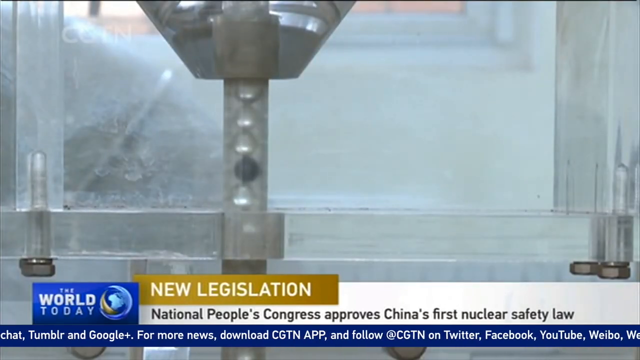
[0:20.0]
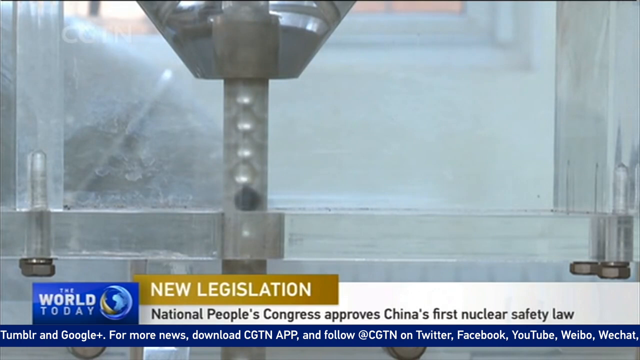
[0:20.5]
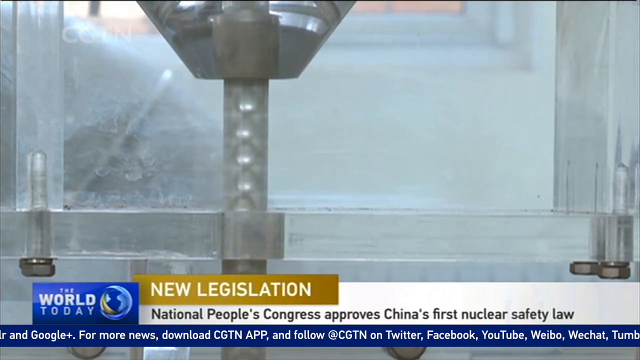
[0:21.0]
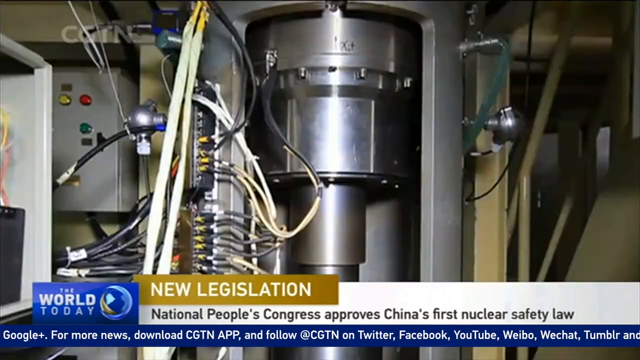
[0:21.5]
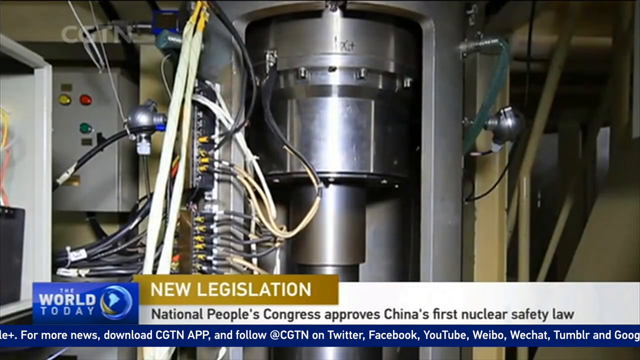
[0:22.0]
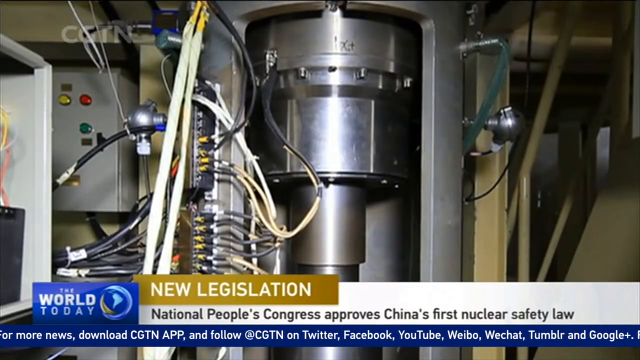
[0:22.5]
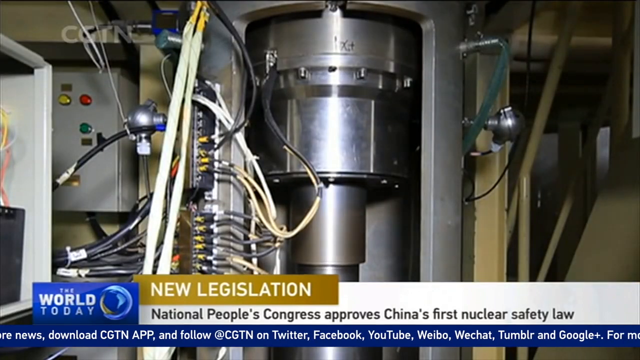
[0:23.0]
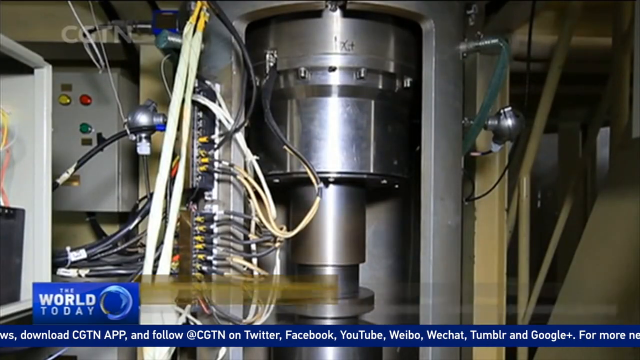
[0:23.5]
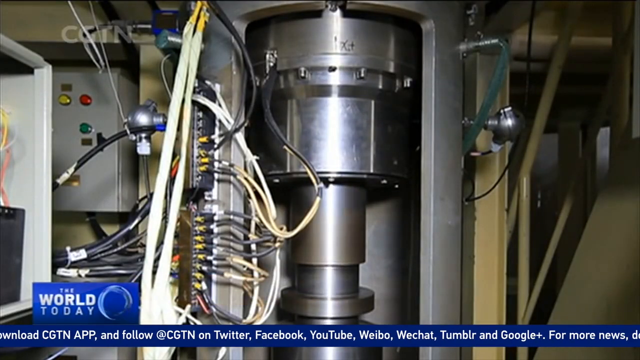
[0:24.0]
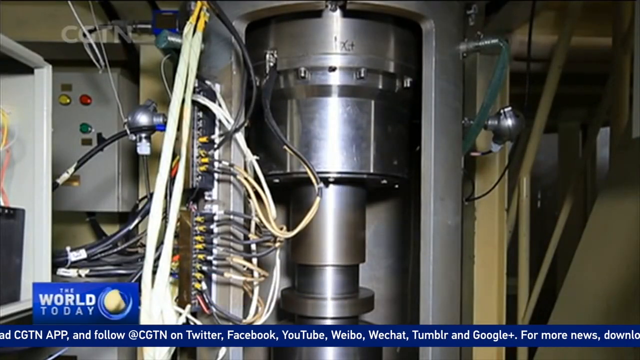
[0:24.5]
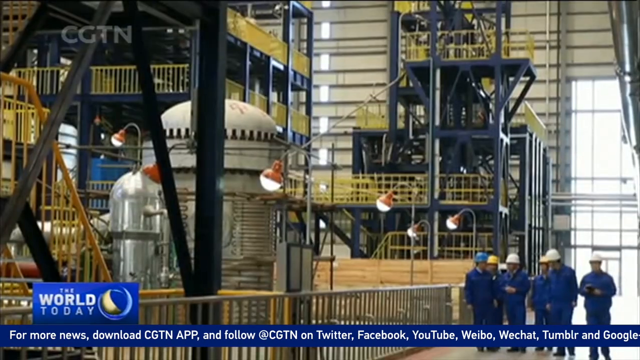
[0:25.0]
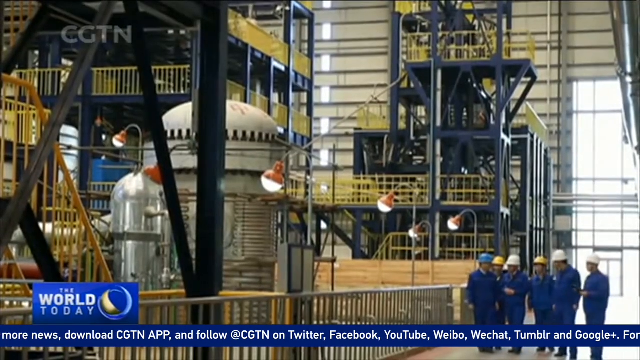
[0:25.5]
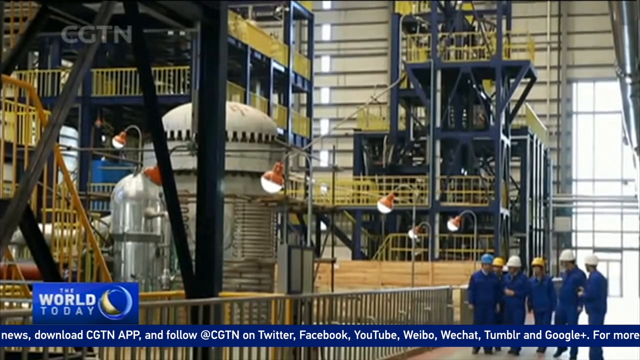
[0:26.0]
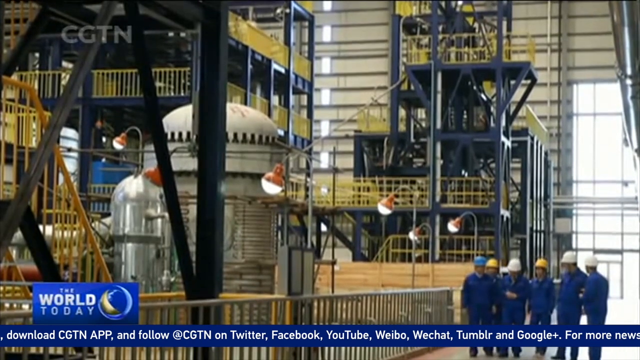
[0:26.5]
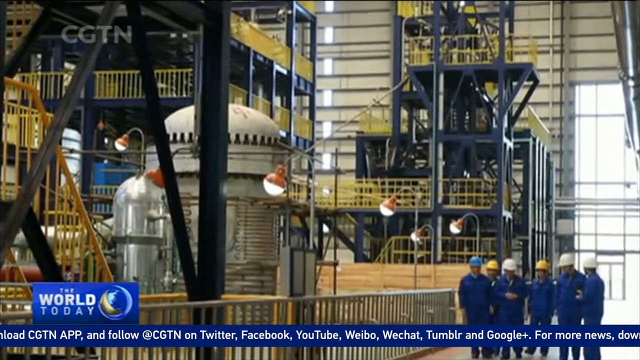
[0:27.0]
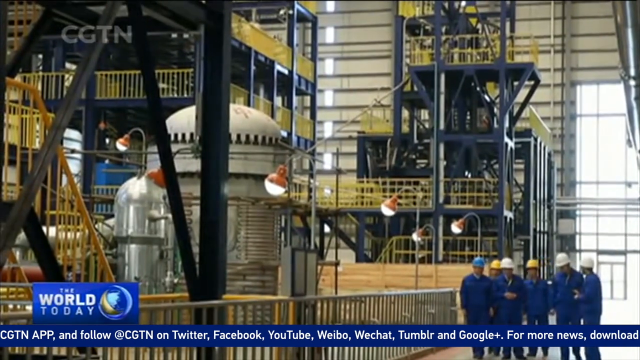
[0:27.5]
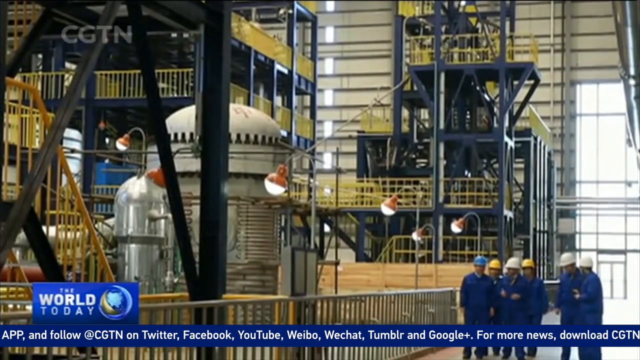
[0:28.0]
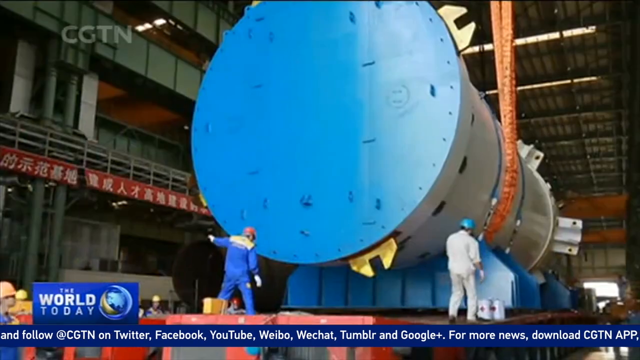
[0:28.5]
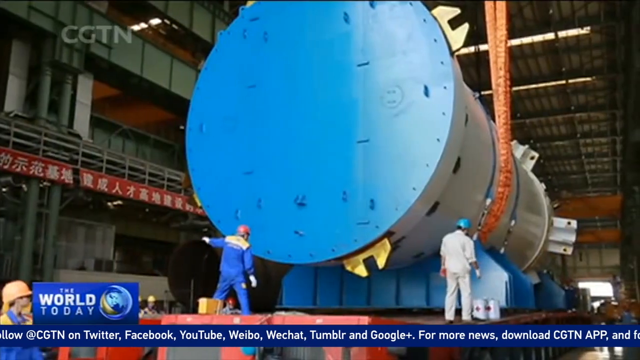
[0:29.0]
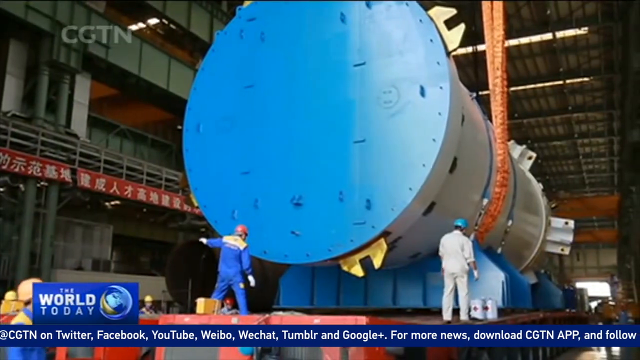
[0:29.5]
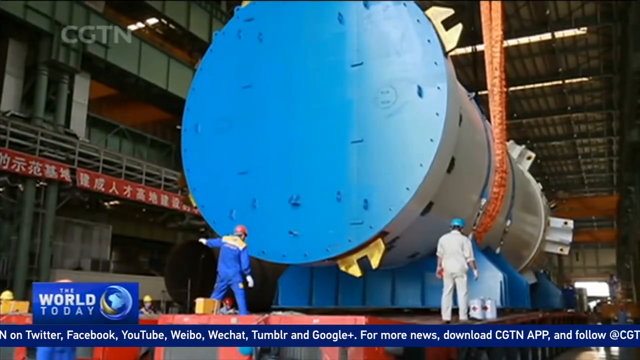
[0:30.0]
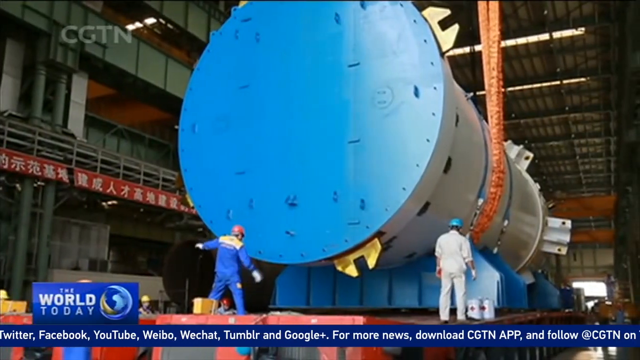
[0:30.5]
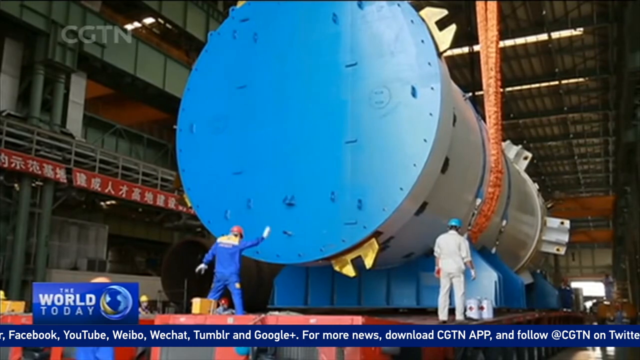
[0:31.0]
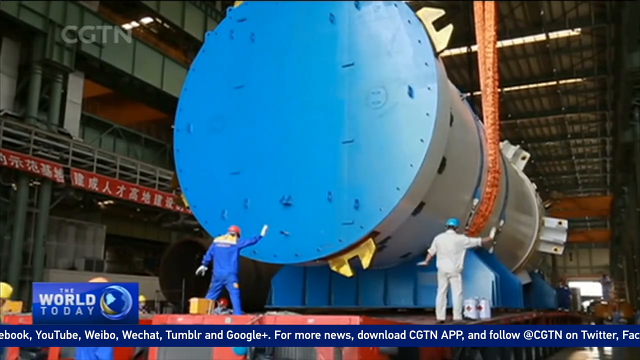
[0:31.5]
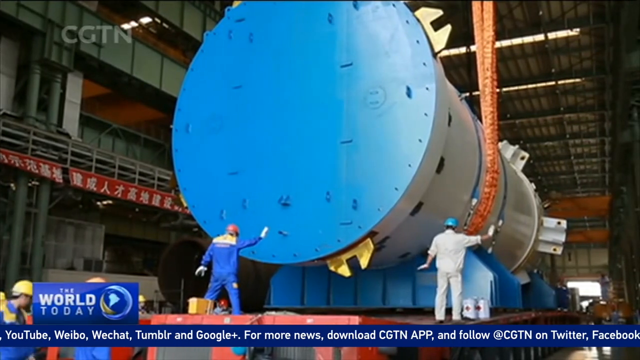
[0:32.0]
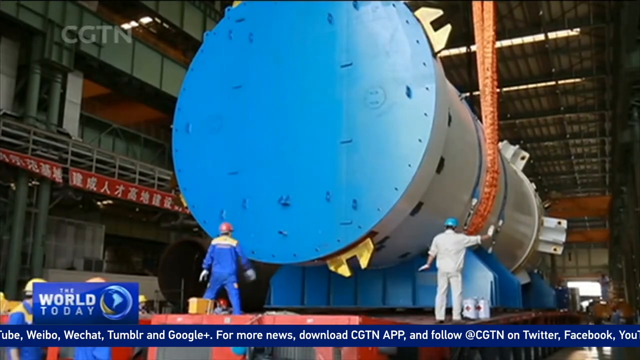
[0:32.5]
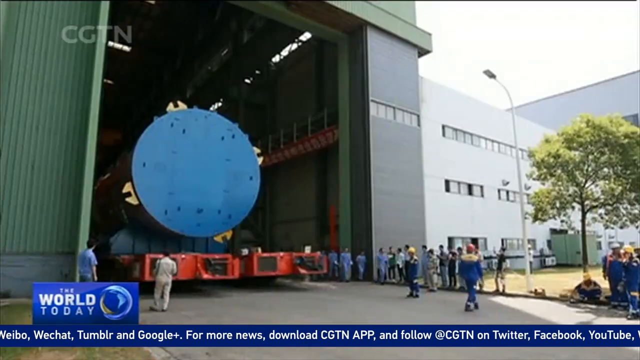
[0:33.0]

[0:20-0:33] The headline reads "New Legislation National People's Congress approves China's first nuclear safety law." To the left of it is a revolving globe with the name of the show, "The World Today." The video shows the inside of a nuclear facility and its daily activity: quite a lot of machinery running, different scenes, cables running left to right, many cooling containers, and huge parts that apparently make up the nuclear reactor. Tradespeople in uniforms march through the facility wearing hard hats colored blue, yellow and white, predominantly in blue coveralls, doing inspections as they harness and lift one huge section after another.